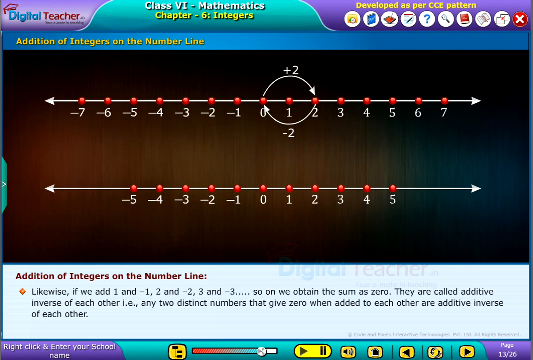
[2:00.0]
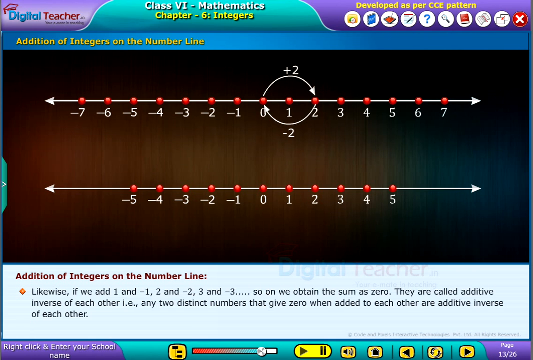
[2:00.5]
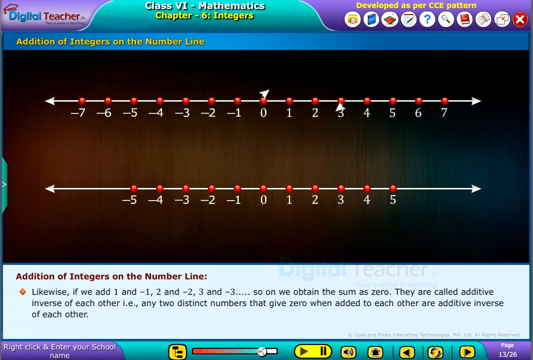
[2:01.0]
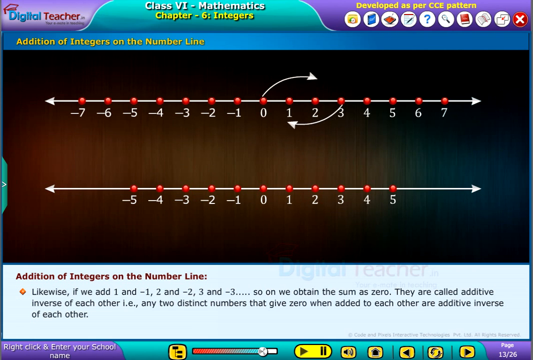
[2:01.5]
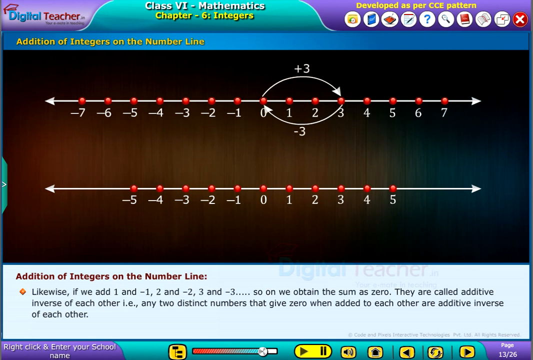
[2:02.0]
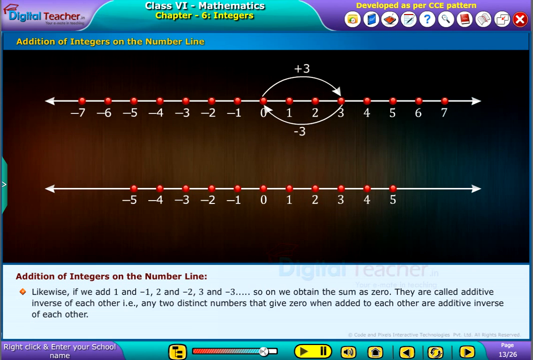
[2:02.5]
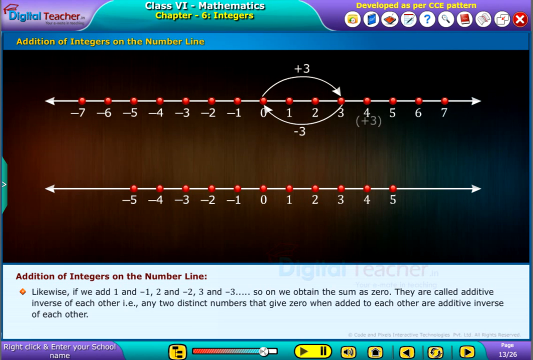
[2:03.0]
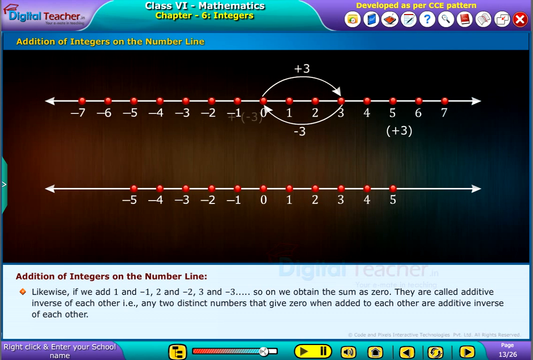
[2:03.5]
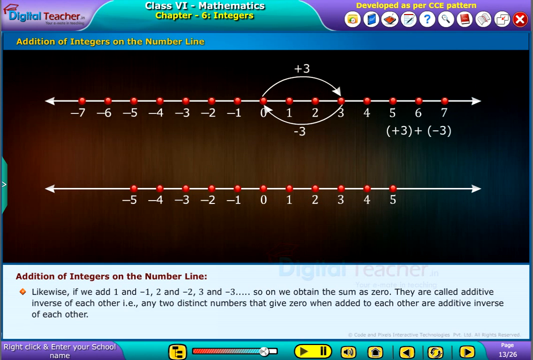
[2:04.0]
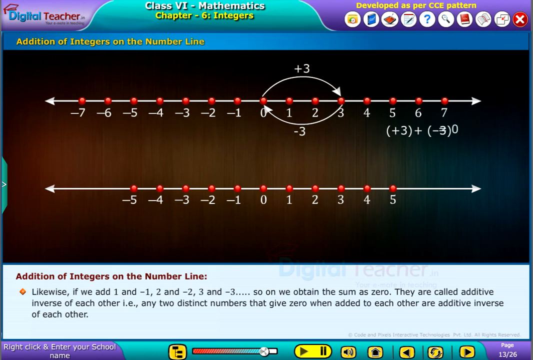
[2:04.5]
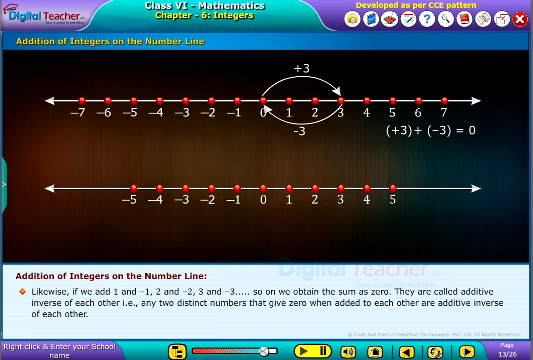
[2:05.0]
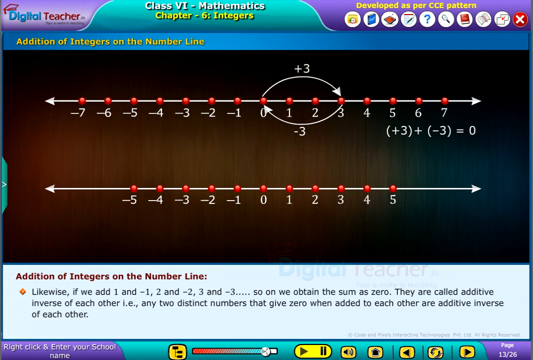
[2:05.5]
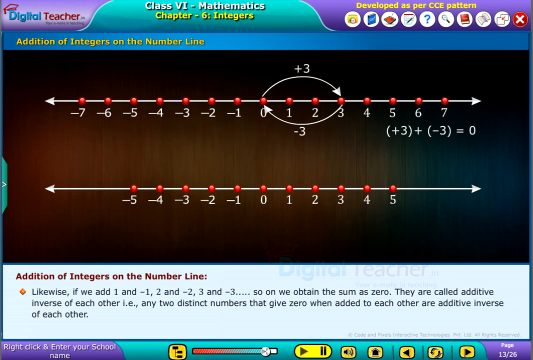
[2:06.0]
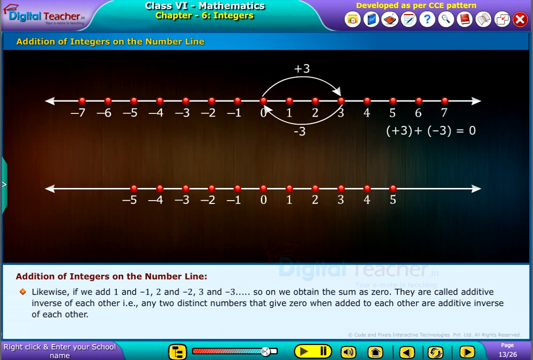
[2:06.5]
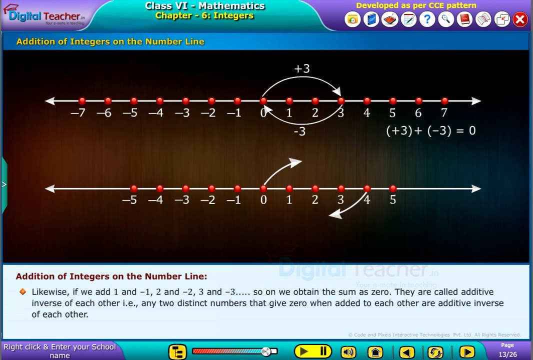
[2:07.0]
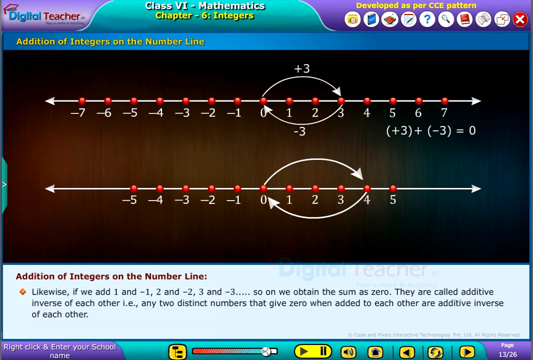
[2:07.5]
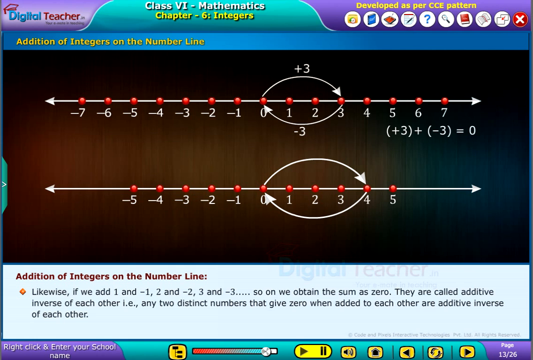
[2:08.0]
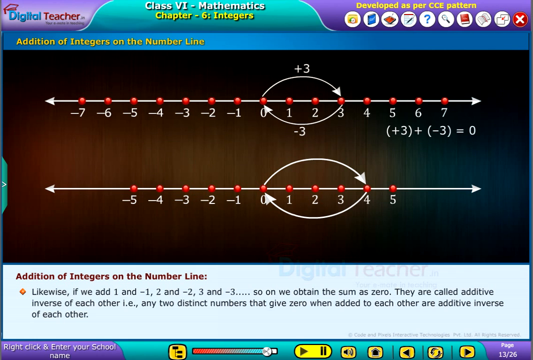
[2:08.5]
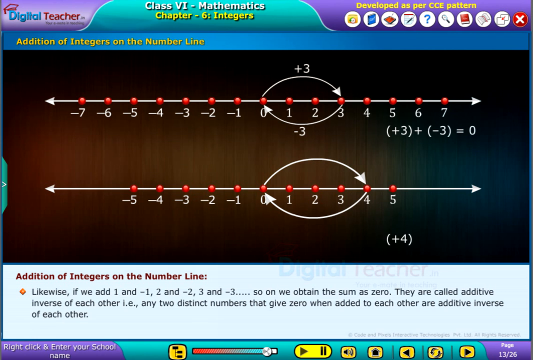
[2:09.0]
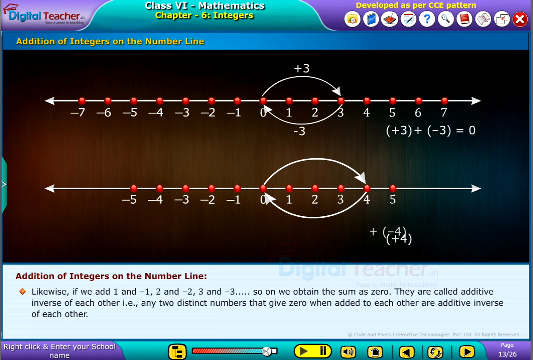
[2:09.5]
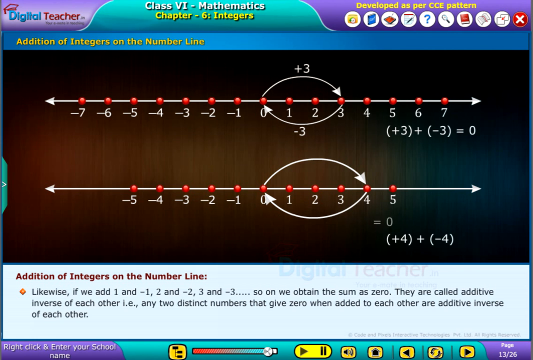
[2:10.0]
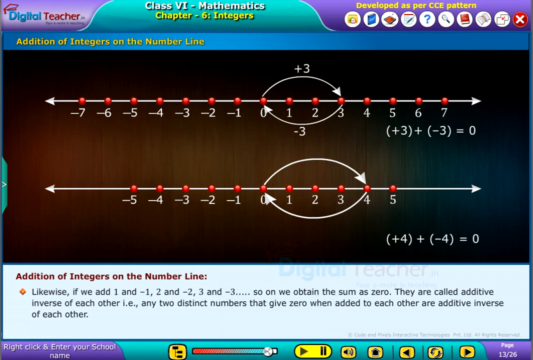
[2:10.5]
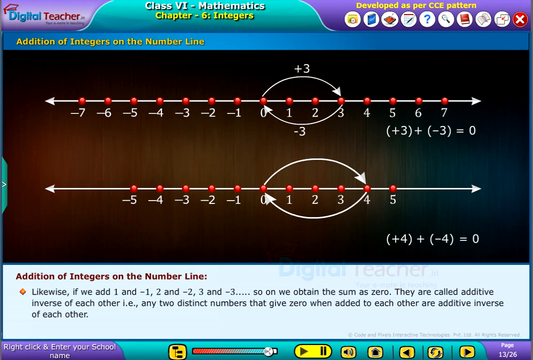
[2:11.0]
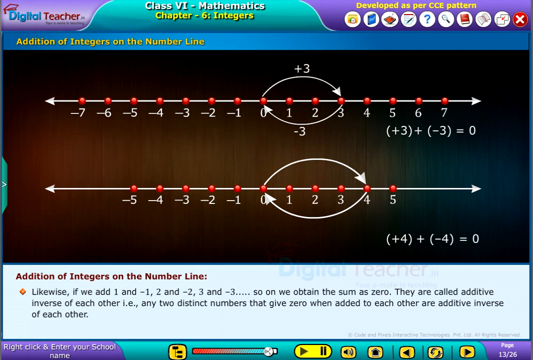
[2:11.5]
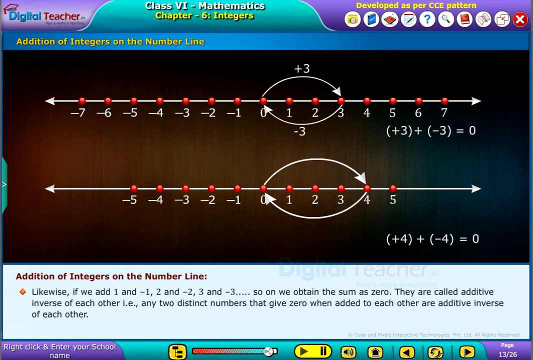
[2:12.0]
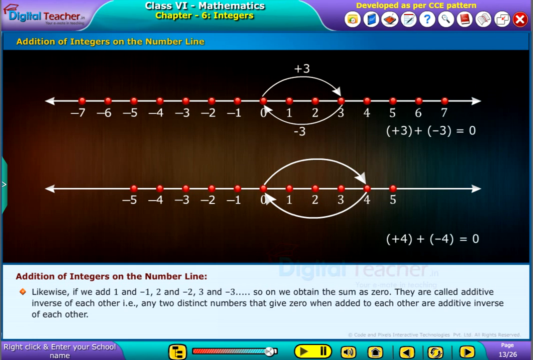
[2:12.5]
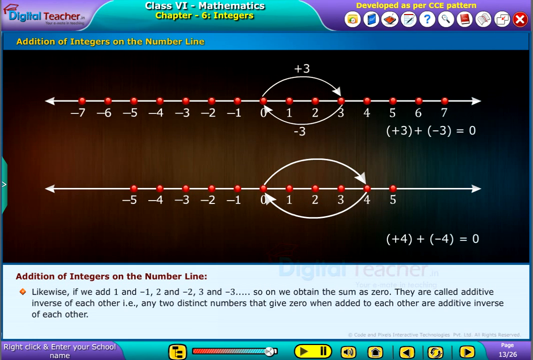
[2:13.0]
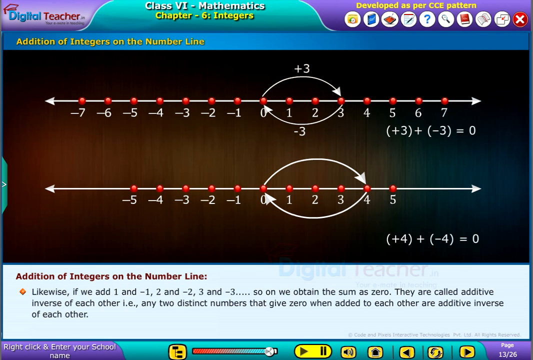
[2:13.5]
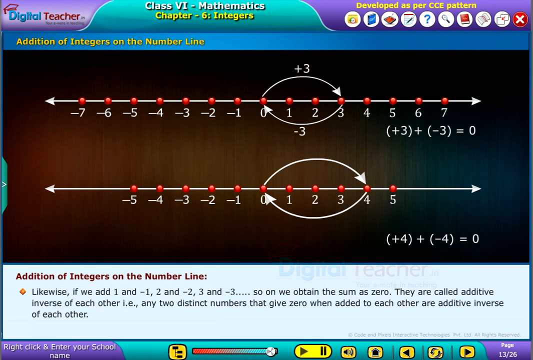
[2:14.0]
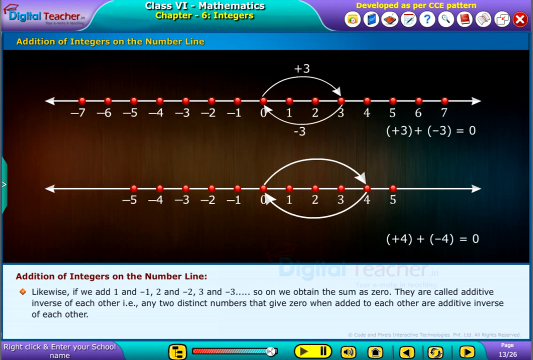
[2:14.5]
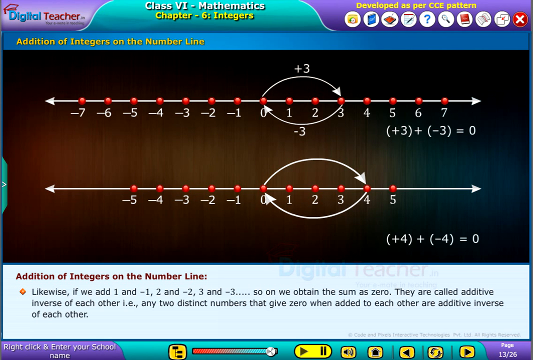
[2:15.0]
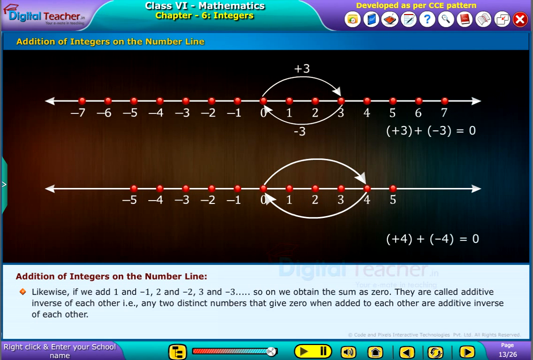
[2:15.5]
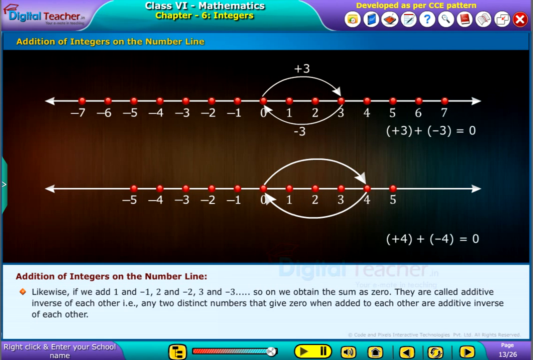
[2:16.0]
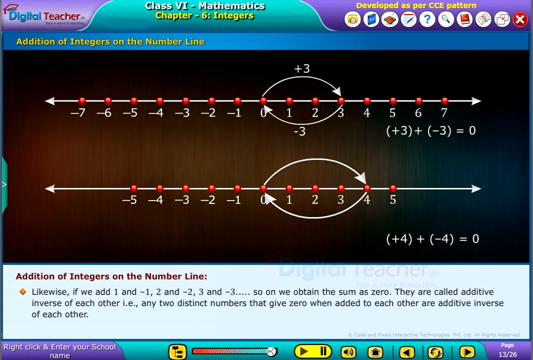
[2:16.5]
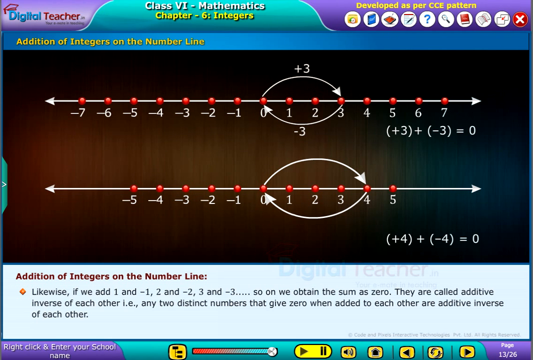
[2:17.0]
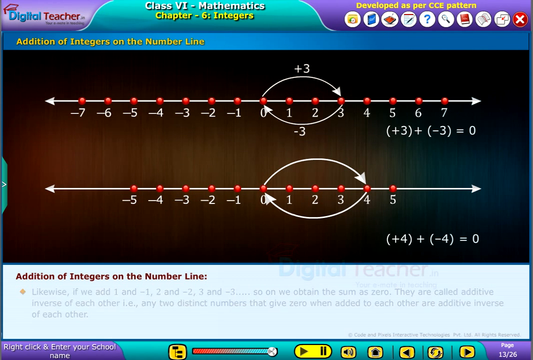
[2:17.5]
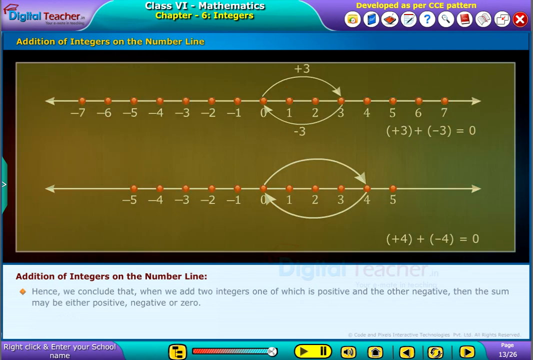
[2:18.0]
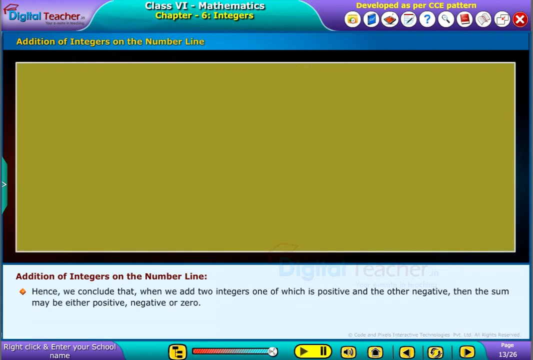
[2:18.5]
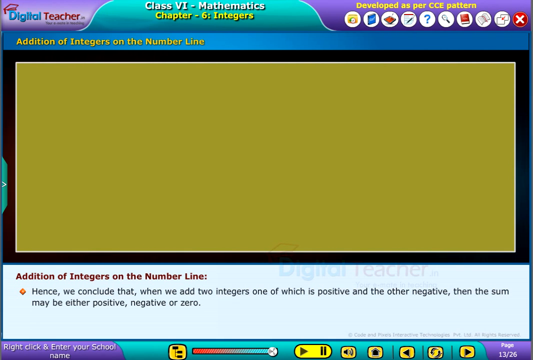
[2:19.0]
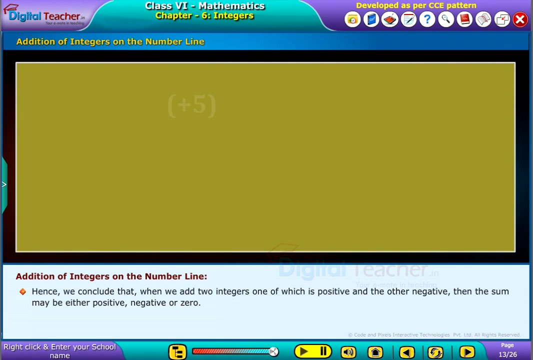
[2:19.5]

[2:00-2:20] On the top number line, an upward arrow goes to positive 2 with "plus 2" above it, and from 2 a downward arrow goes back to 0 with "negative 2" below it. The same is done with 3: an upward arrow to 3 with "plus 3" above it and a downward arrow to 0 with "negative 3" below it. White text below the first number line says "positive 3 plus negative 3 equals to 0", and these annotations stay on the first number line. On the second number line, an upward arrow goes from 0 to 4 and a downward arrow from 4 back to 0, with an equation below it reading "positive 4 plus negative 4 equals to 0". The screen with the number lines is then replaced by a giant yellow-green rectangle that takes up most of it, and the bottom text says "Hence, we conclude that when we add two integers, one of which is positive and the other negative, then the sum may either be positive, negative, or zero."